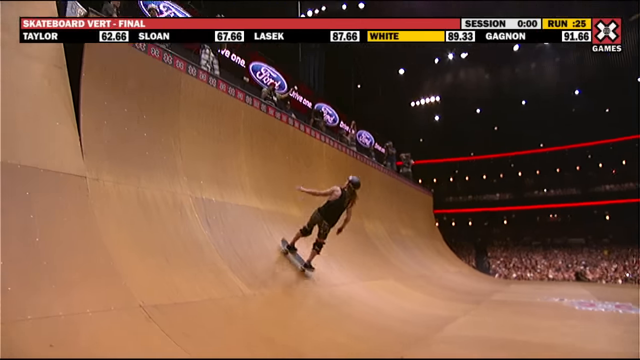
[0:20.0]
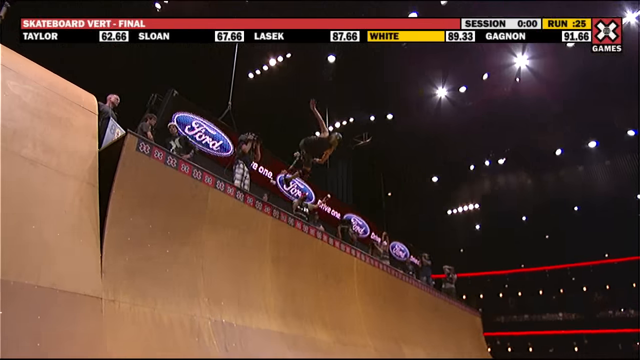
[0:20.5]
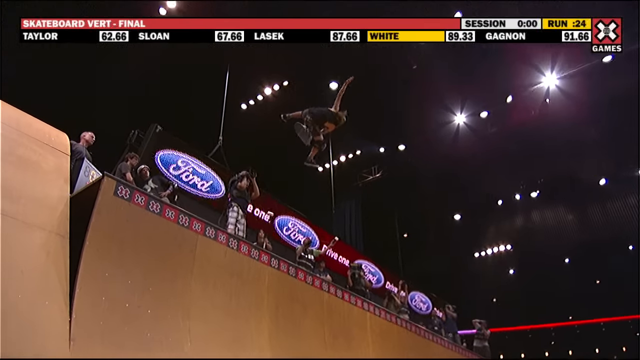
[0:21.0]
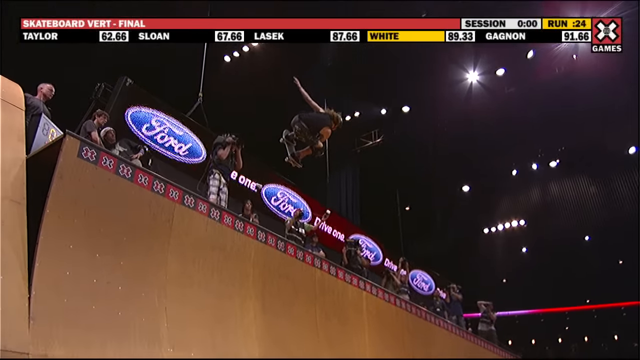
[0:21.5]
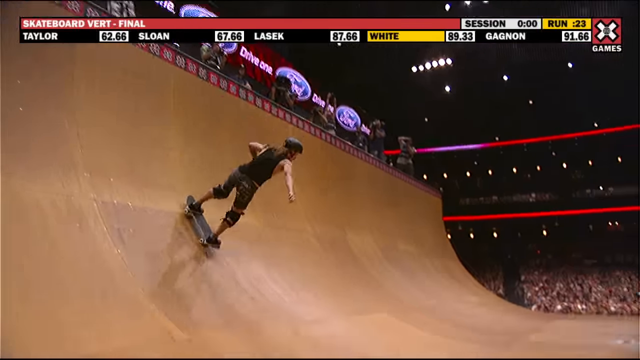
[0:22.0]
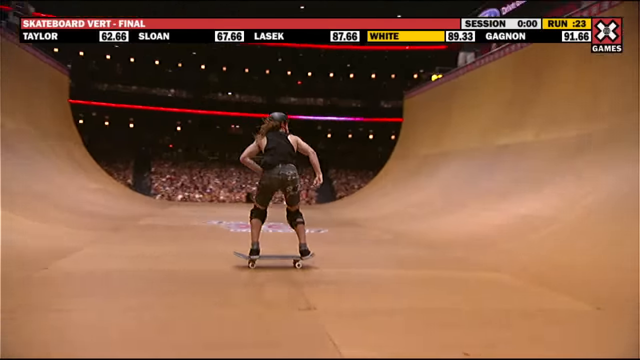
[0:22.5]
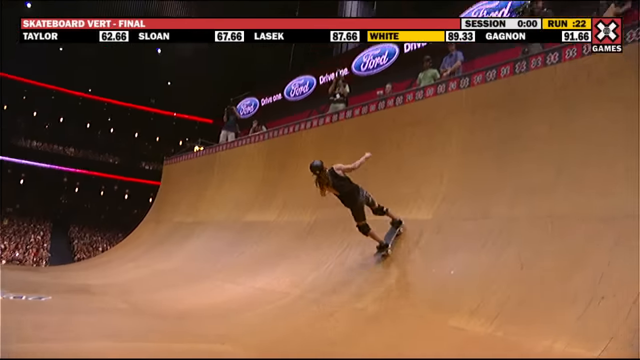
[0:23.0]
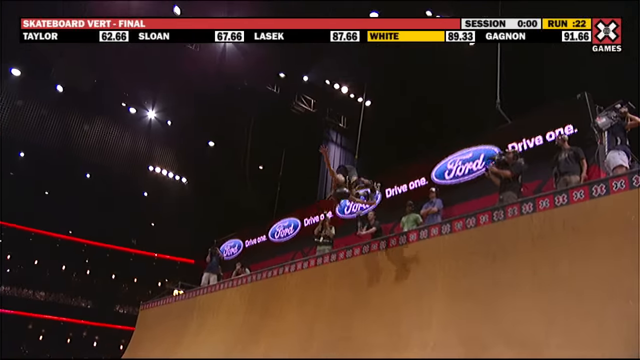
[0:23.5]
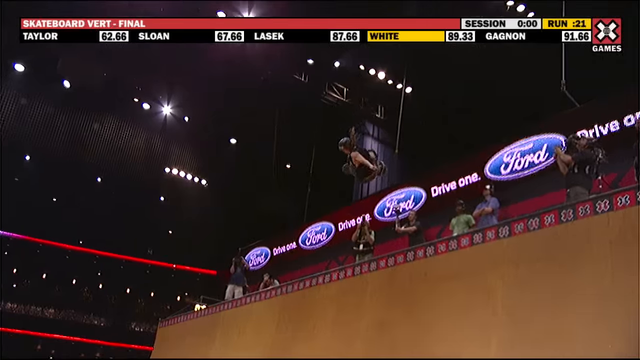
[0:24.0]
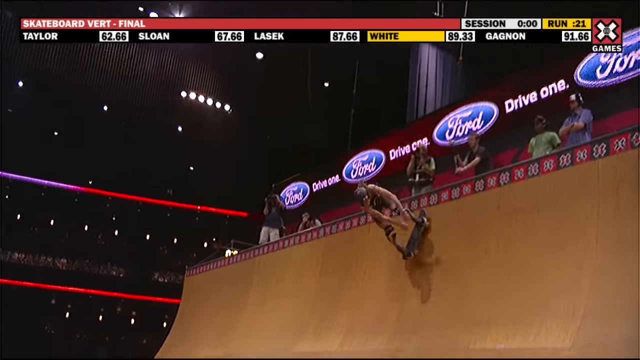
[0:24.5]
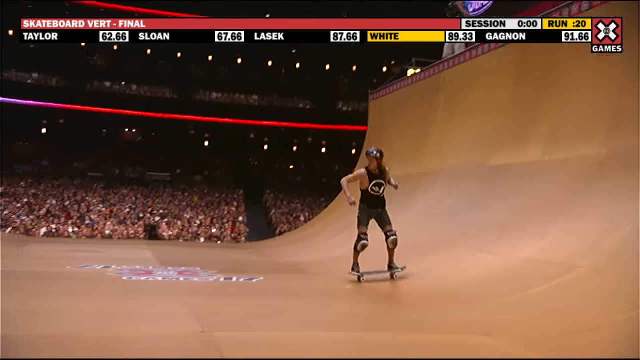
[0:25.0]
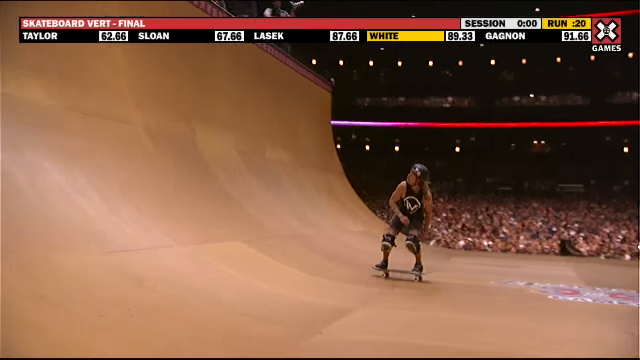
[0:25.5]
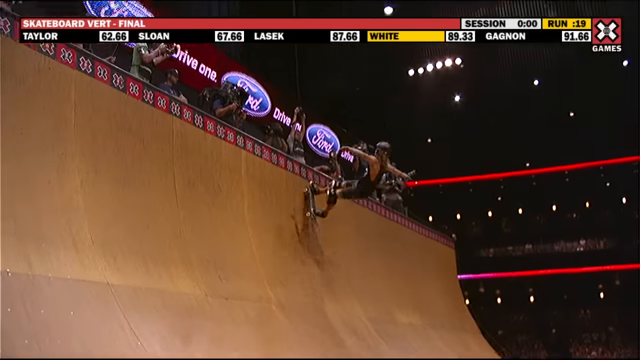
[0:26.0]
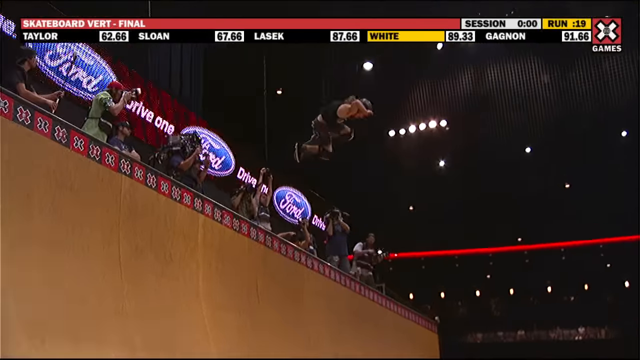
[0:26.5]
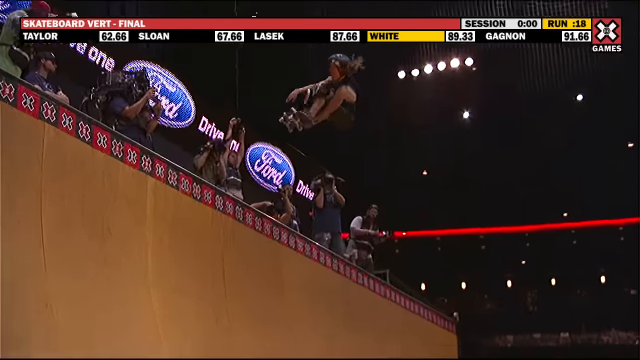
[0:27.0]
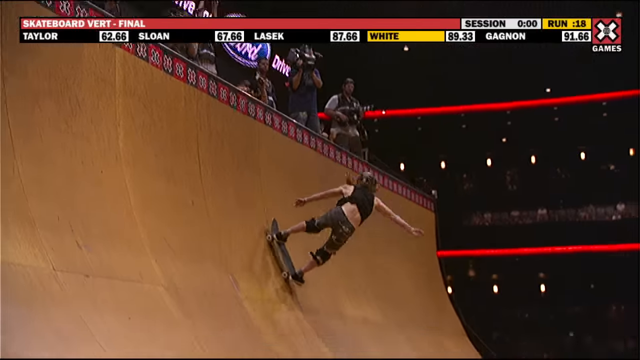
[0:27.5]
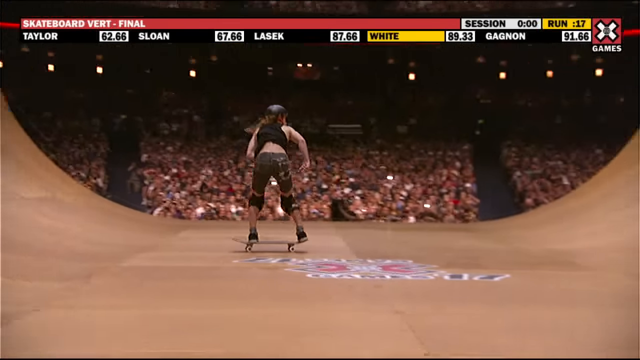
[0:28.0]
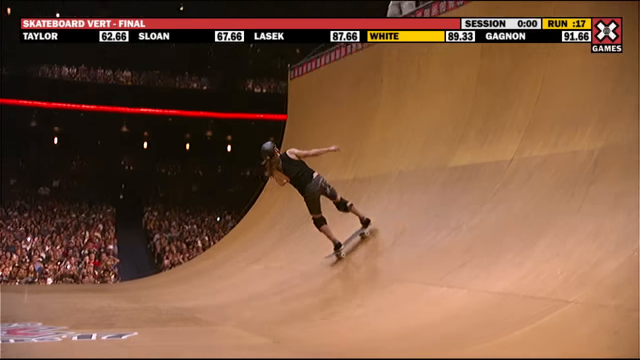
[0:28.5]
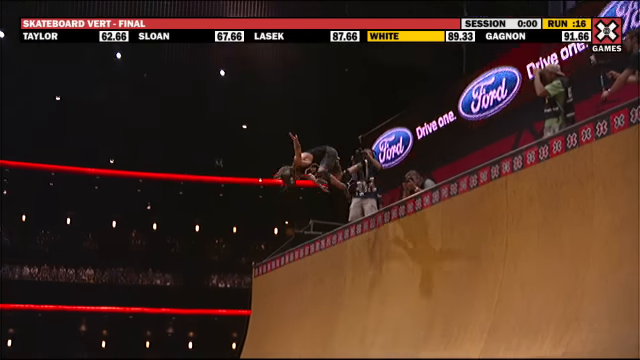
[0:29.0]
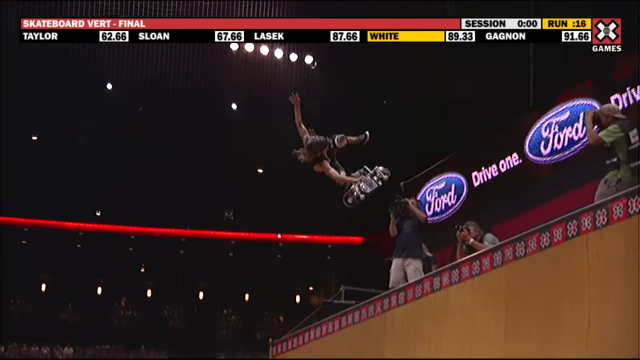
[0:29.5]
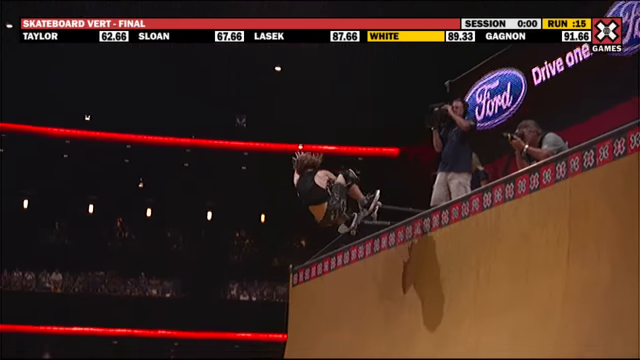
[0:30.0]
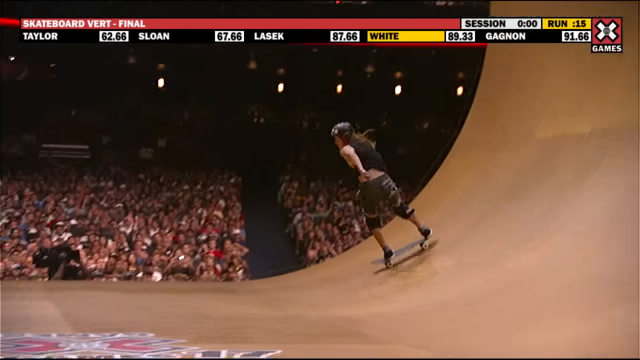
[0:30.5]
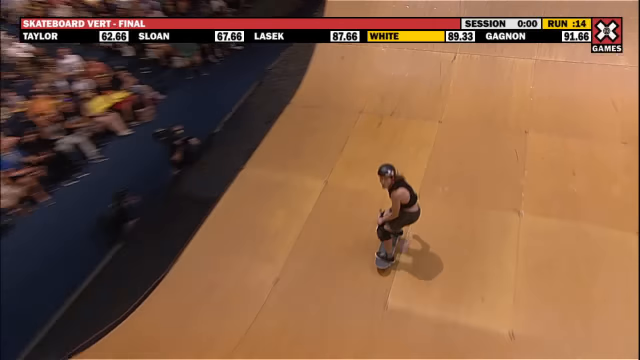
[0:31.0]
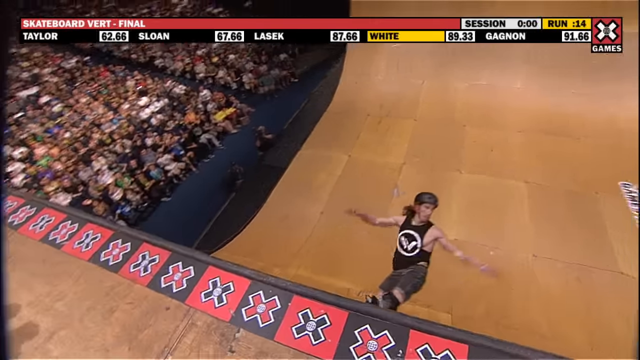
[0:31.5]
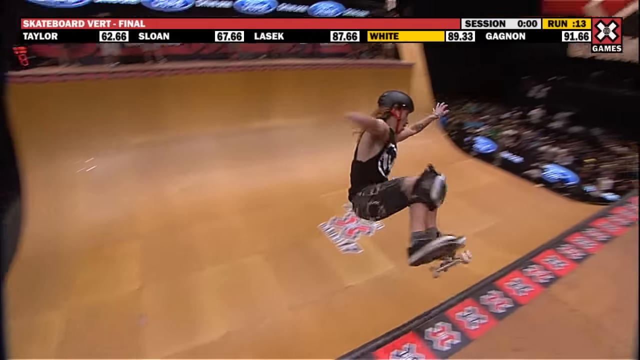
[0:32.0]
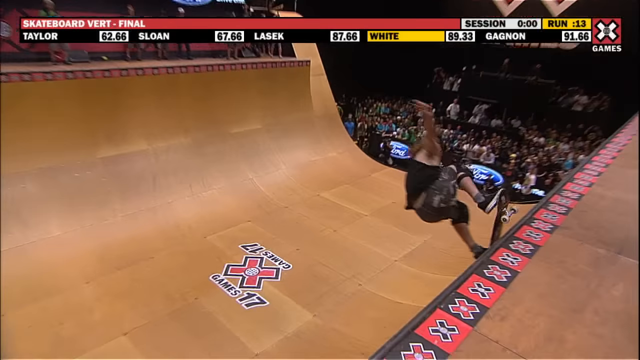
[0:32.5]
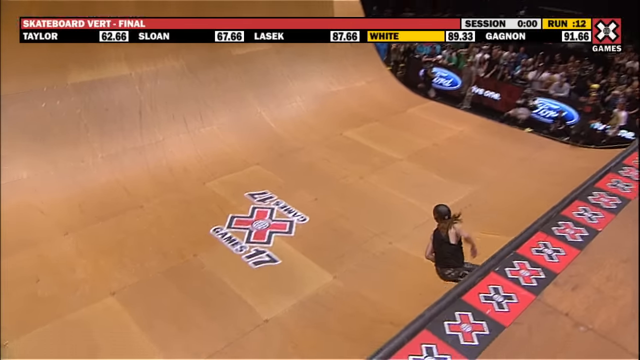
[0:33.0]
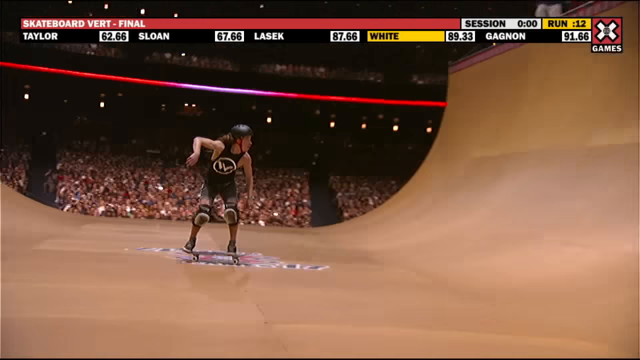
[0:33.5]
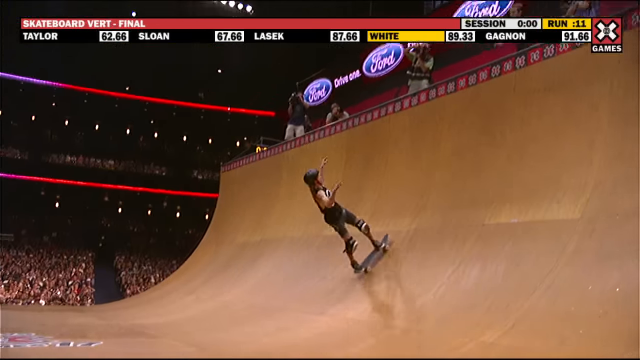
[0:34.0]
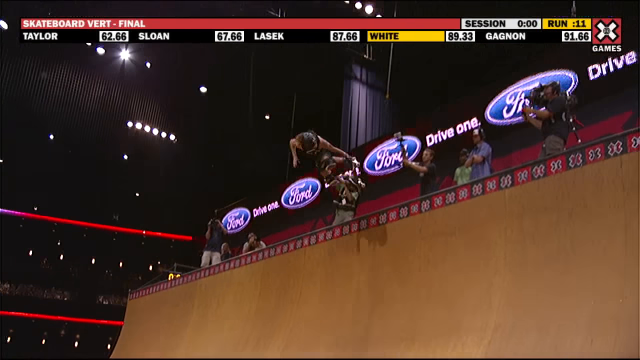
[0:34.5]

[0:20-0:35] A skateboarder in a black t-shirt goes back and forth on a half-pipe ramp that is meters tall, doing a series of tricks: twisting around, sliding a little on the rail at the top, and reaching down to grab the board. He pulls off all of his tricks without any falls. Many people in the crowd are watching, probably over a thousand, and camera people have huge cameras trained on the skateboarder. Red and black Xs run along the top of the ramp on both sides and look like a brand logo. There is also advertising by Ford, the auto company, at the top of the ramp, and red stripes run all around the stands.